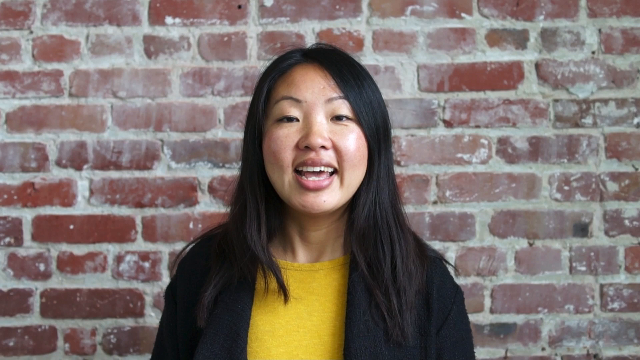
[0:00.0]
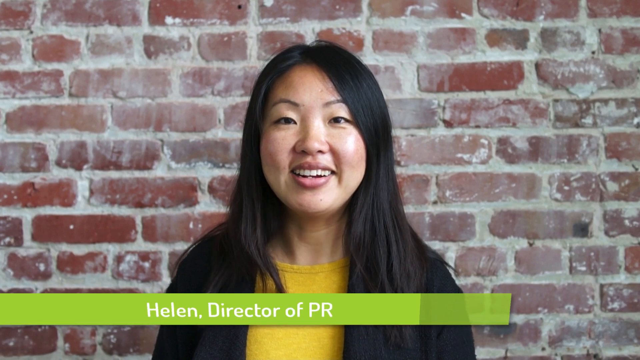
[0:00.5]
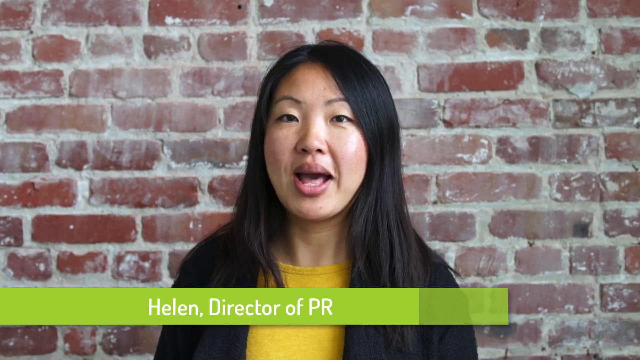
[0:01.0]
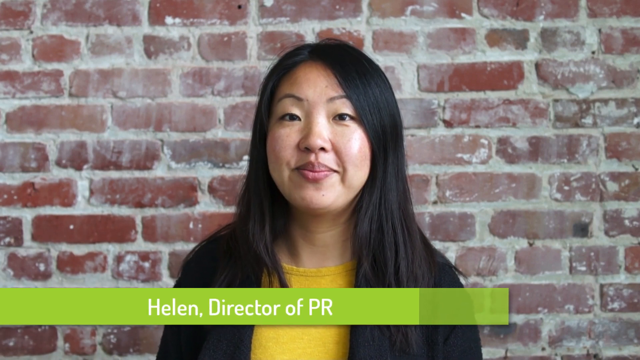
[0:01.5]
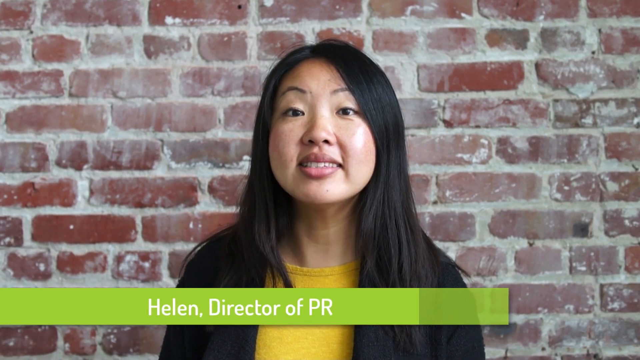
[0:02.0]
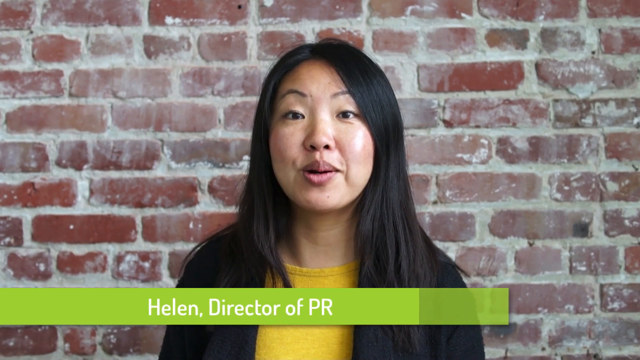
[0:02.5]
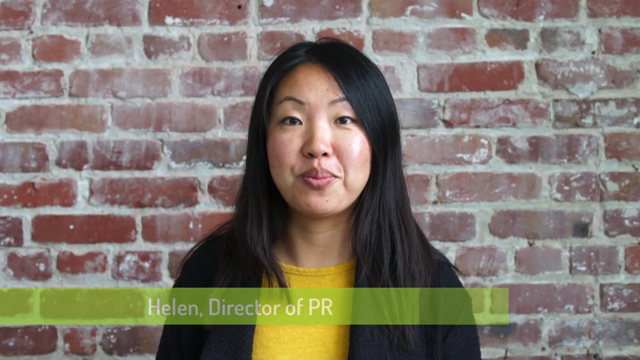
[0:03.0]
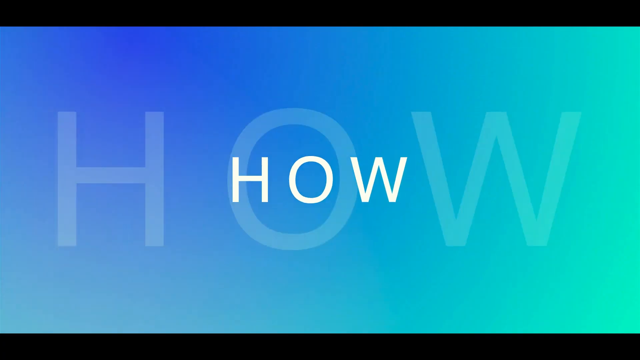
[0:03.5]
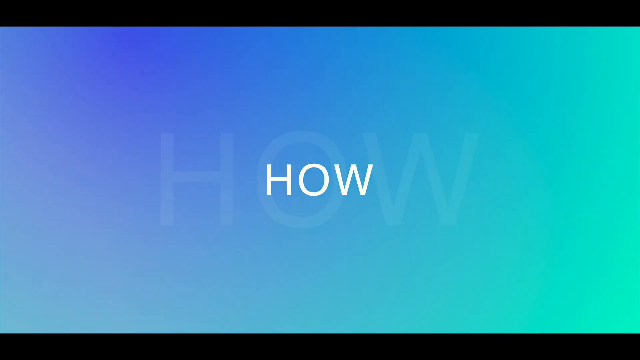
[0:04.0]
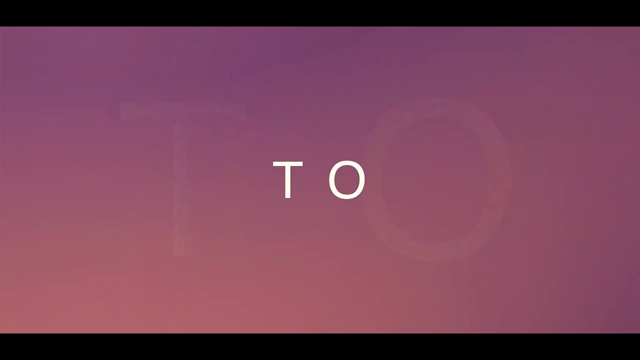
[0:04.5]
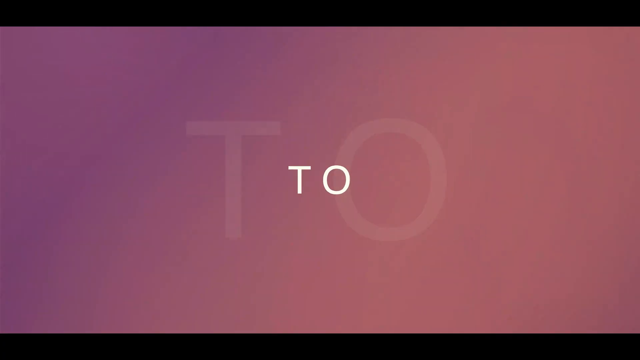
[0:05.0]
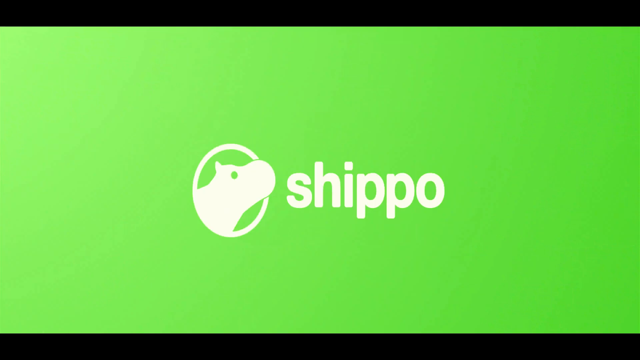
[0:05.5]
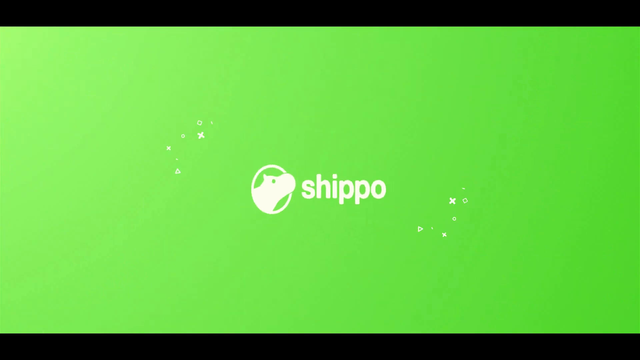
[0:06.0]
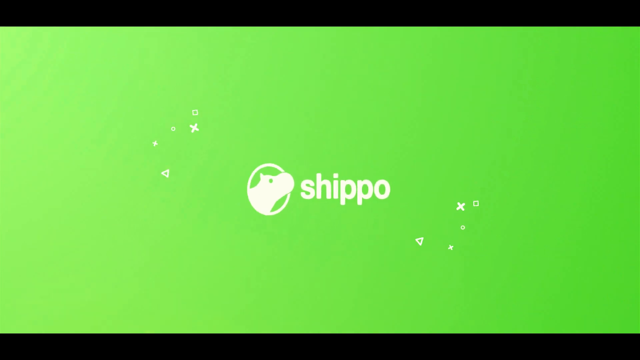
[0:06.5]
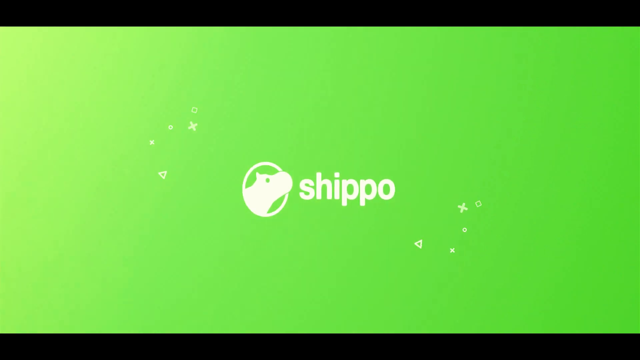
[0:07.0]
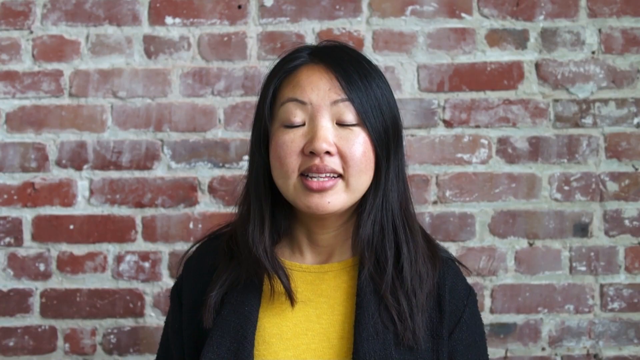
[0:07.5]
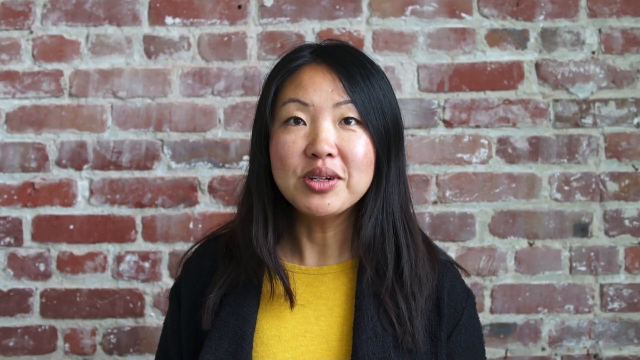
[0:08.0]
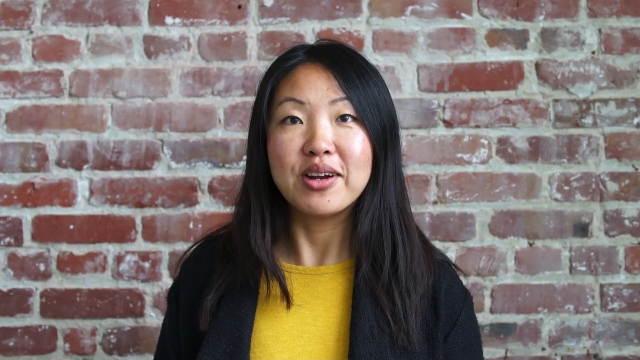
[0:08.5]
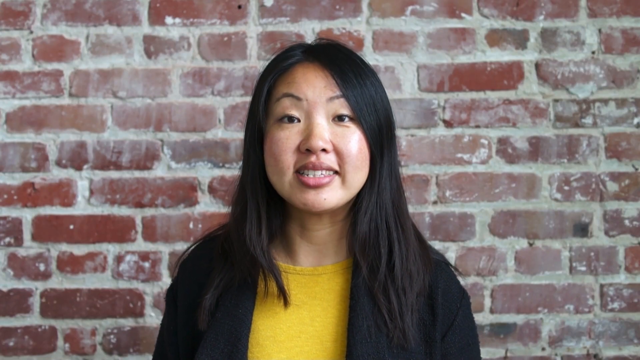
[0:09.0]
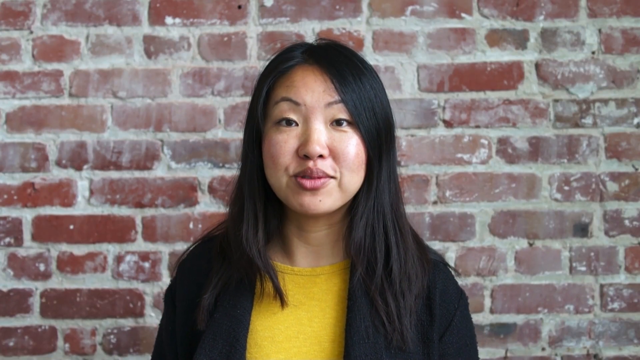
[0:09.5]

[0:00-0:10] A young Asian woman appears in front of a brick wall smeared with a light coat of chalk or concrete residue. Her name comes up across the bottom of the screen: "Helen, director of PR." She is very excited.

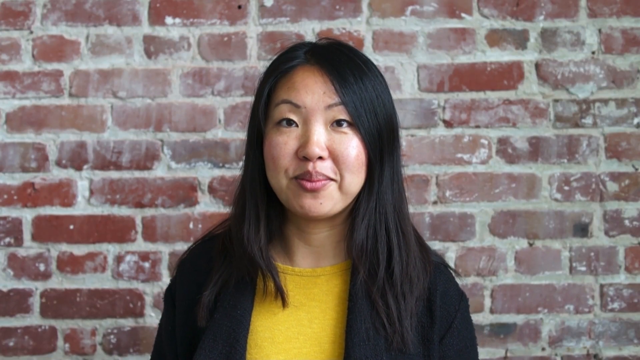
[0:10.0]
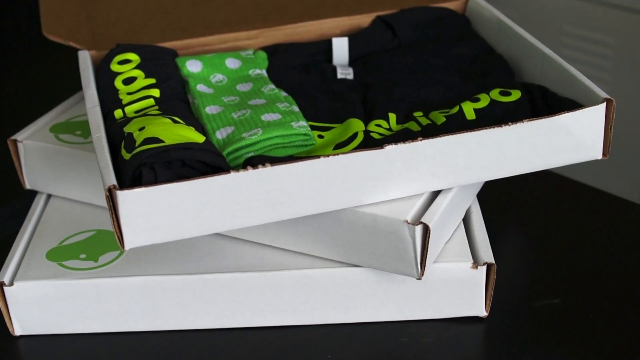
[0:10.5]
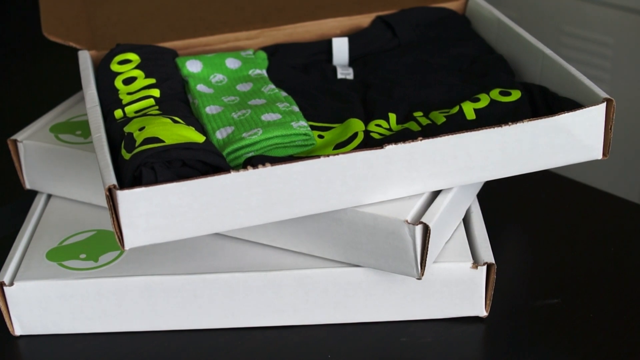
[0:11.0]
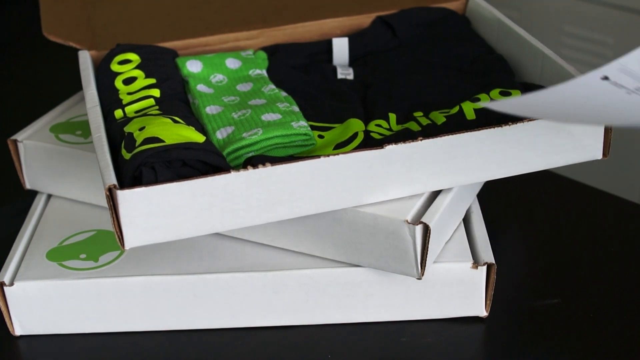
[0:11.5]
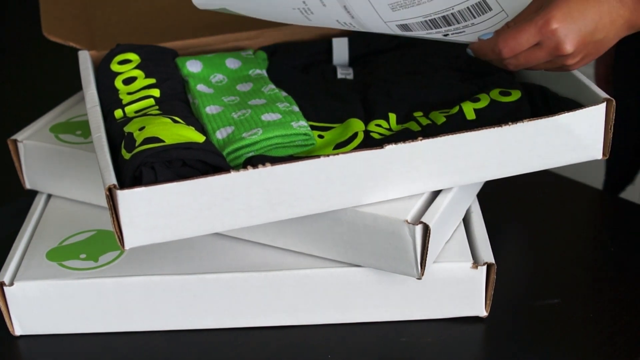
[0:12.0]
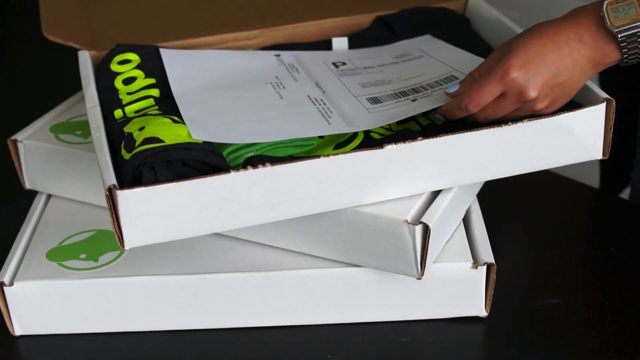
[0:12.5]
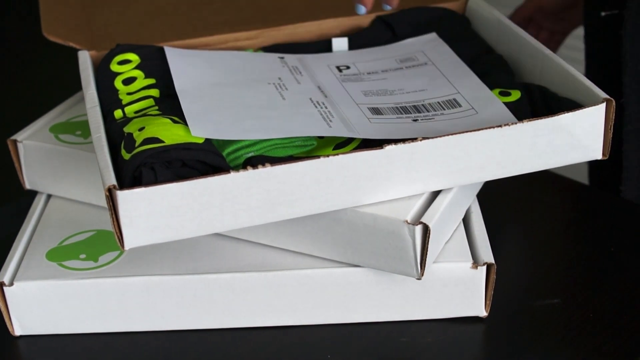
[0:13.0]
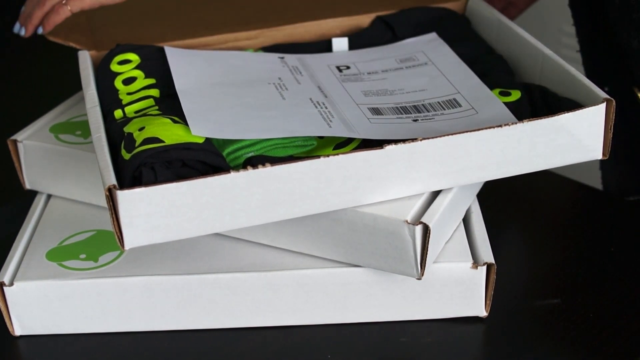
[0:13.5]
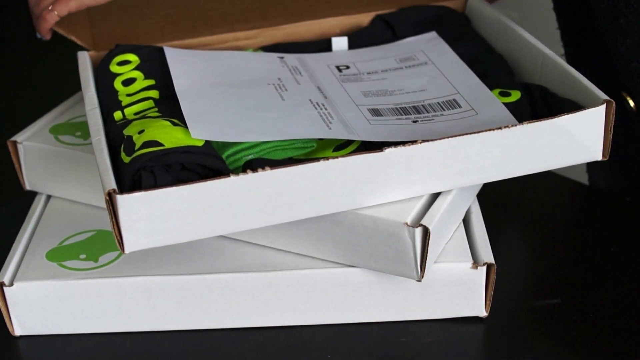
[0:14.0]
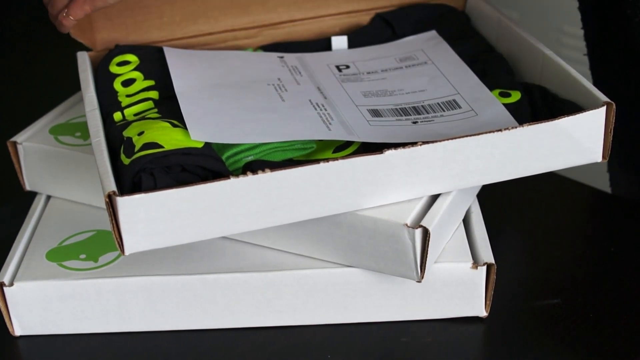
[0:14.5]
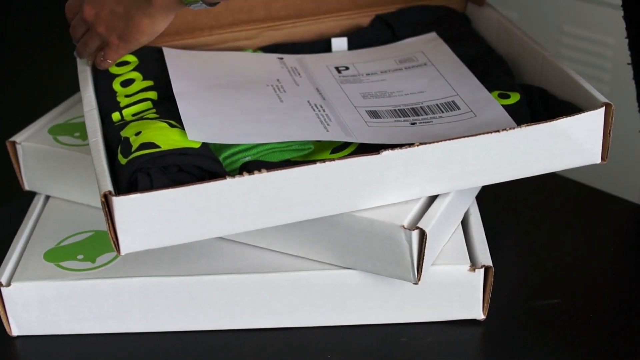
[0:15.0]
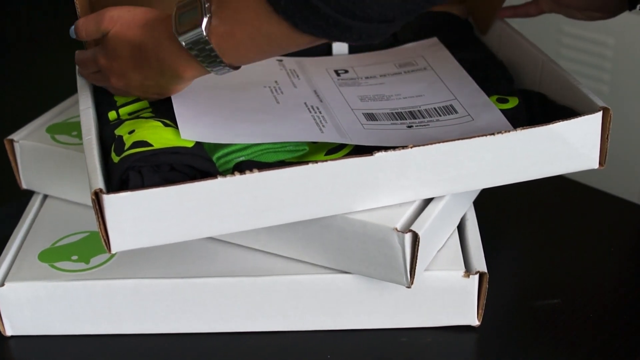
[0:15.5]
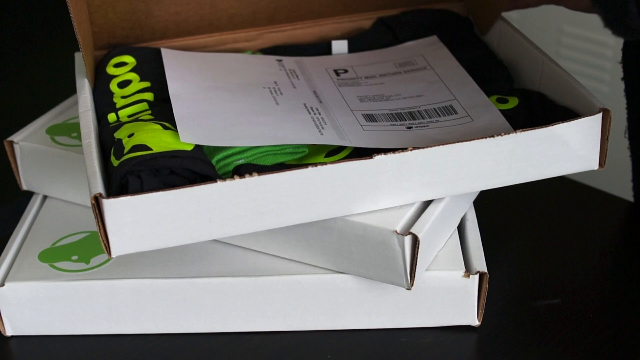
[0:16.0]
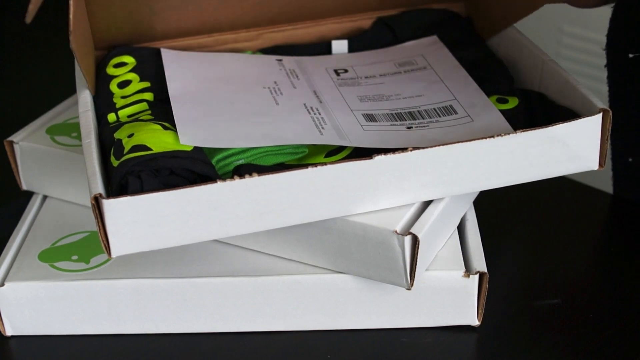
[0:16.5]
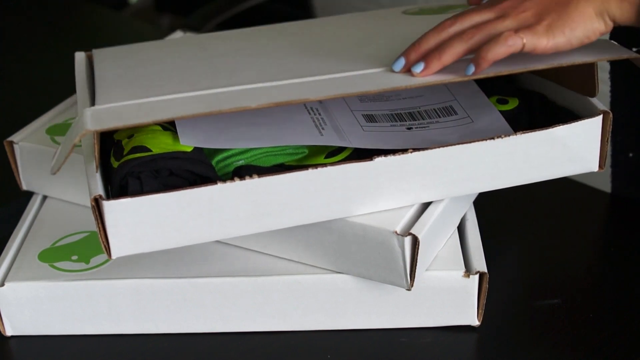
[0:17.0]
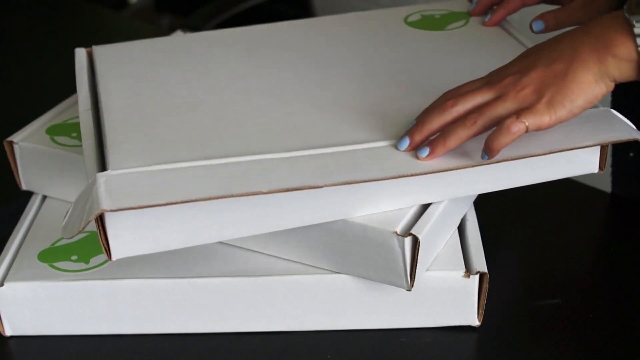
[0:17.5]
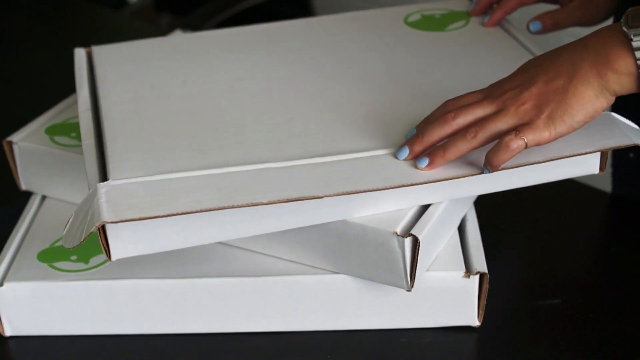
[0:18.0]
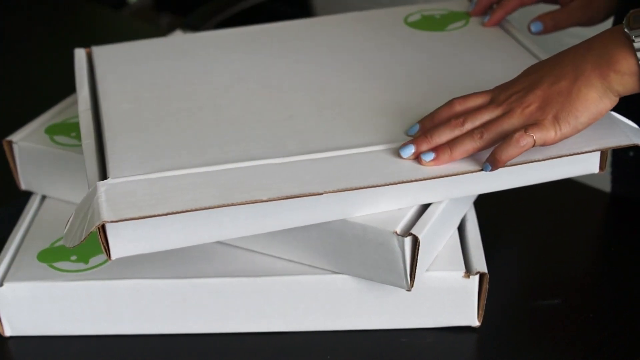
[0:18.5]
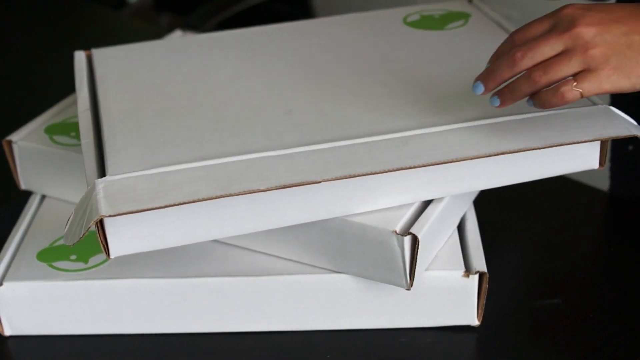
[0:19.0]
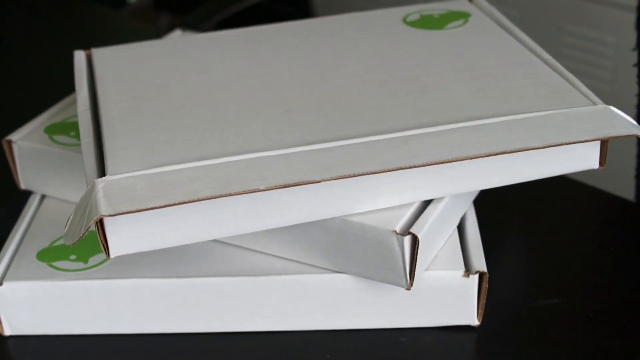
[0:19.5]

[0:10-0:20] She shows boxes with shirts: a black shirt with a yellow Flippo emblem, green shorts with little white dots or pictures on them, and another black item that says "Flippo." It looks like each box contains a return label.